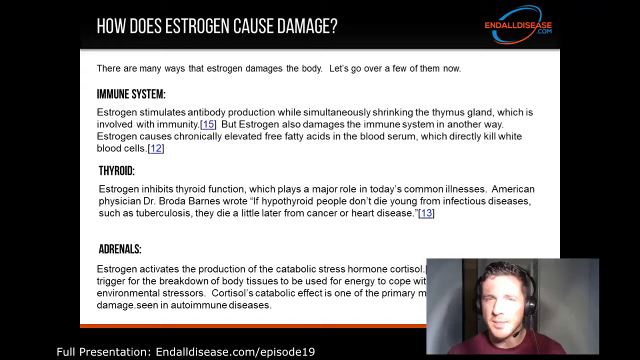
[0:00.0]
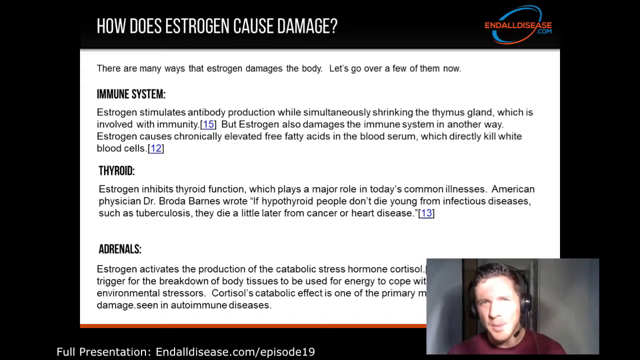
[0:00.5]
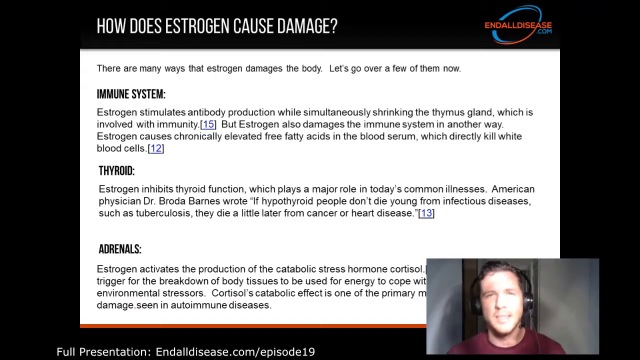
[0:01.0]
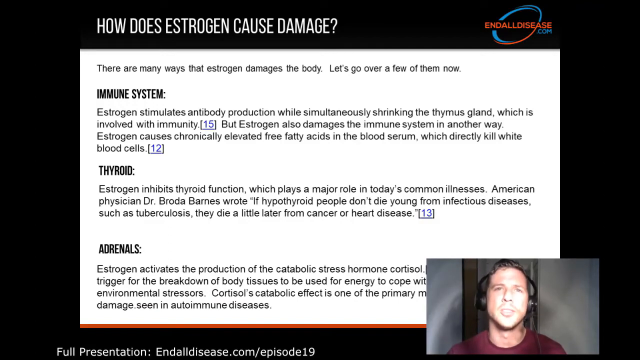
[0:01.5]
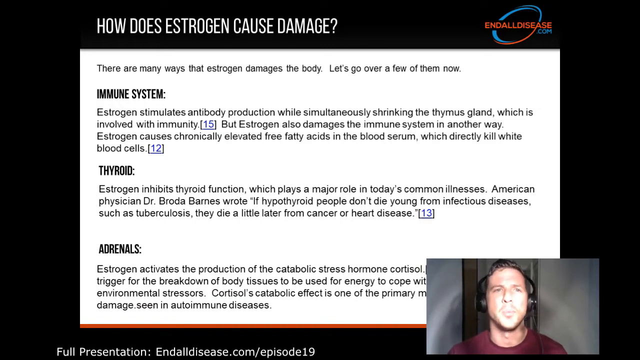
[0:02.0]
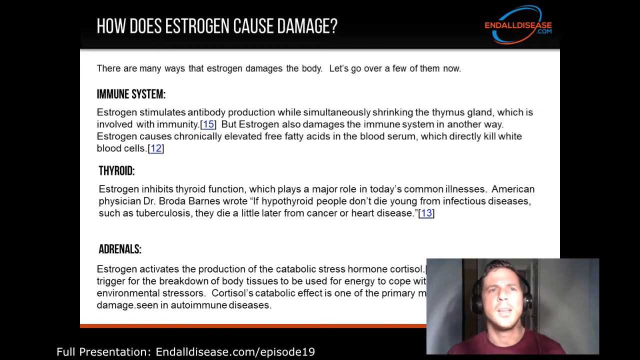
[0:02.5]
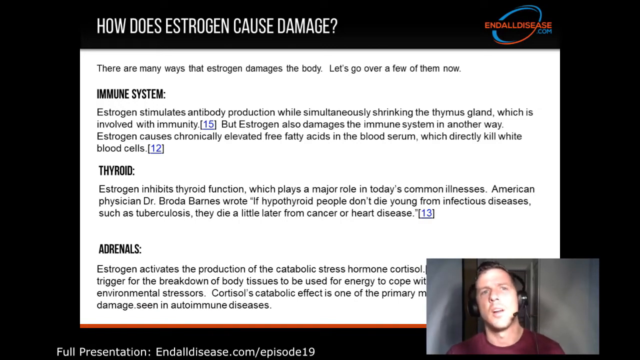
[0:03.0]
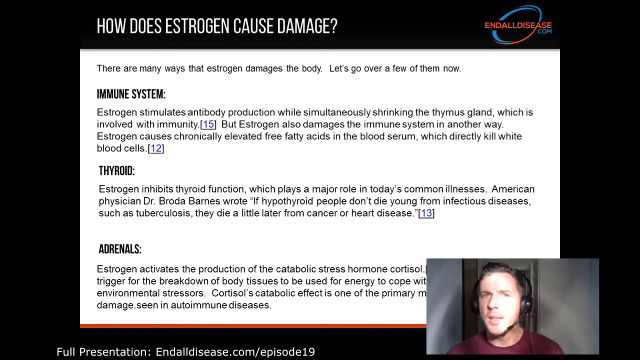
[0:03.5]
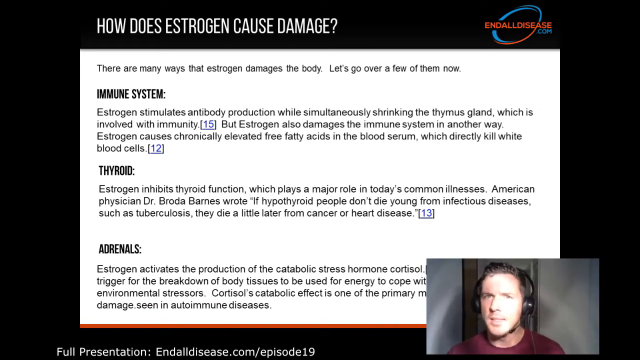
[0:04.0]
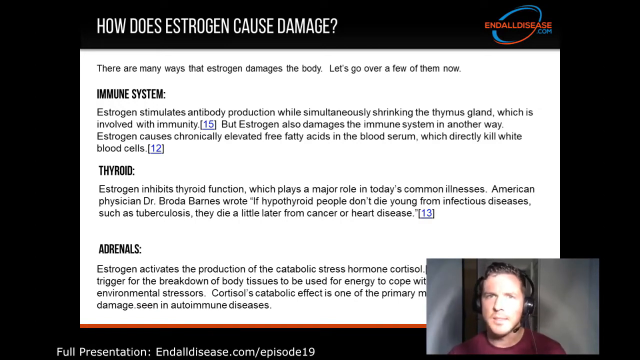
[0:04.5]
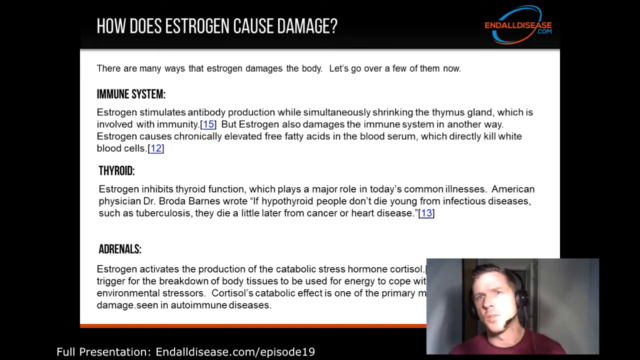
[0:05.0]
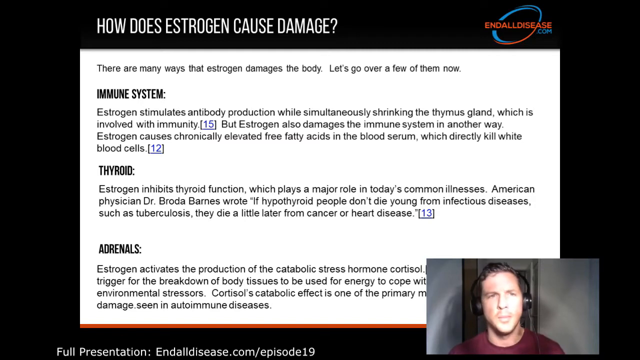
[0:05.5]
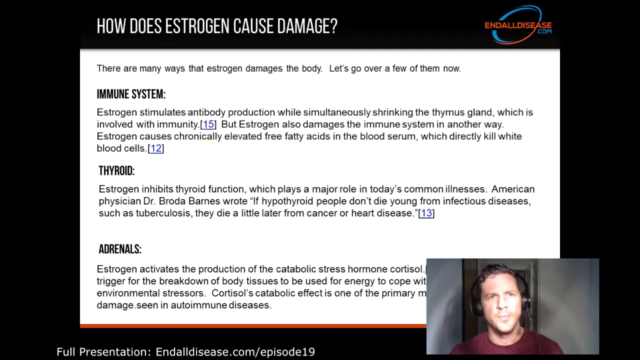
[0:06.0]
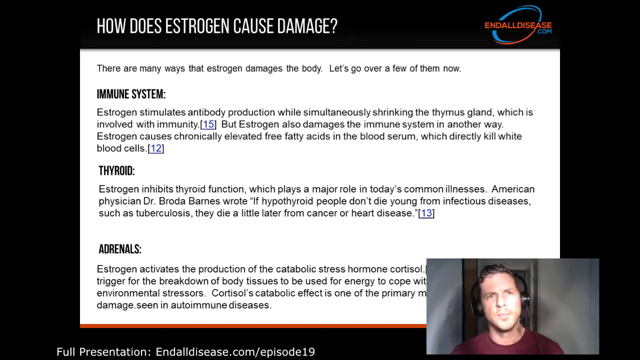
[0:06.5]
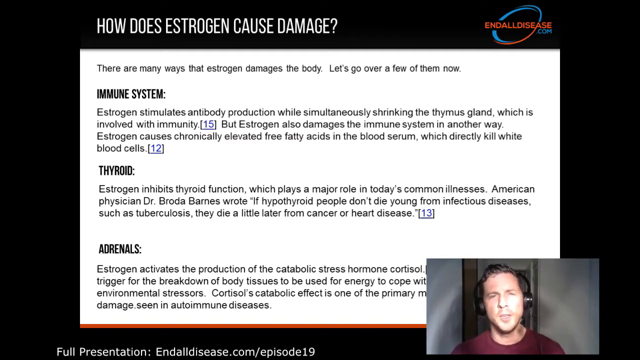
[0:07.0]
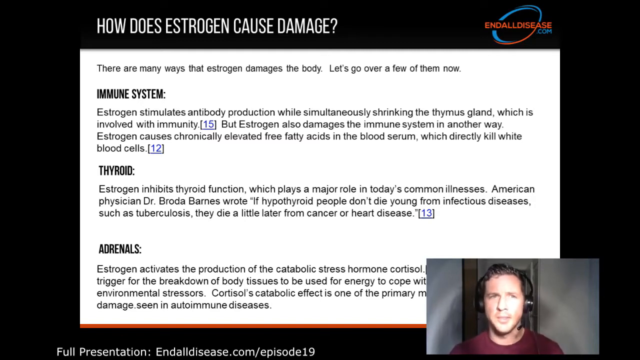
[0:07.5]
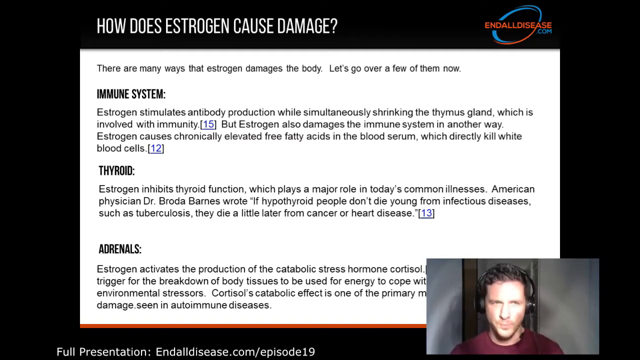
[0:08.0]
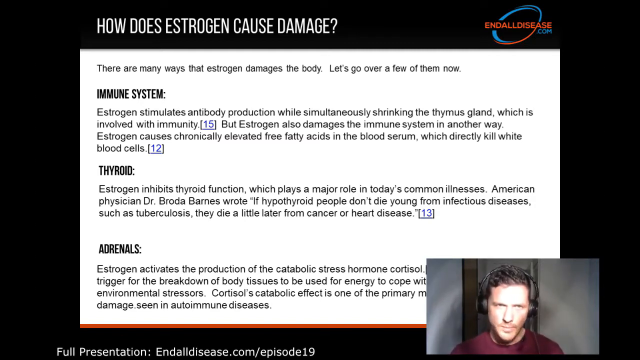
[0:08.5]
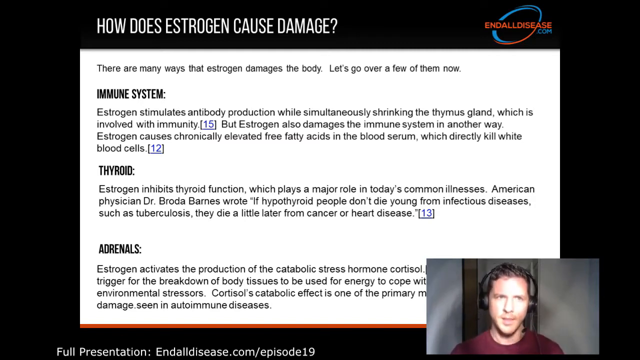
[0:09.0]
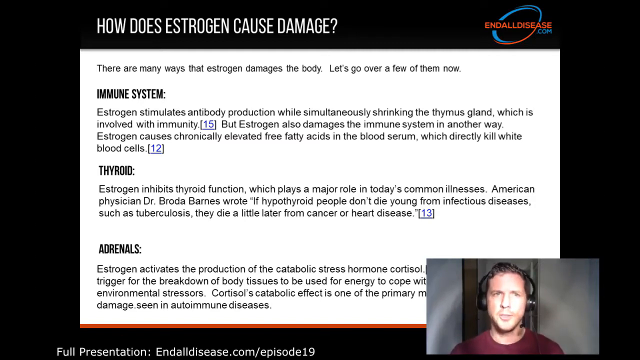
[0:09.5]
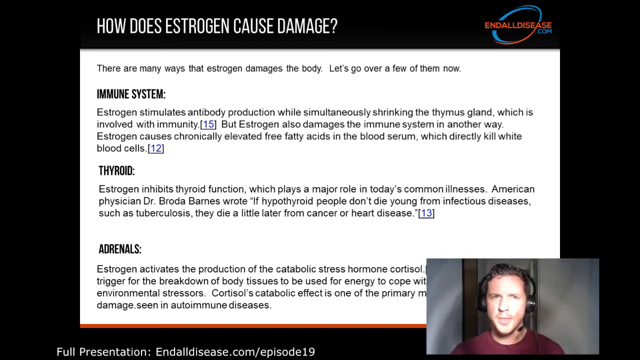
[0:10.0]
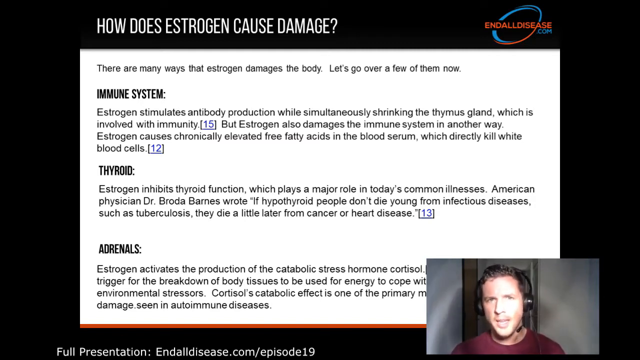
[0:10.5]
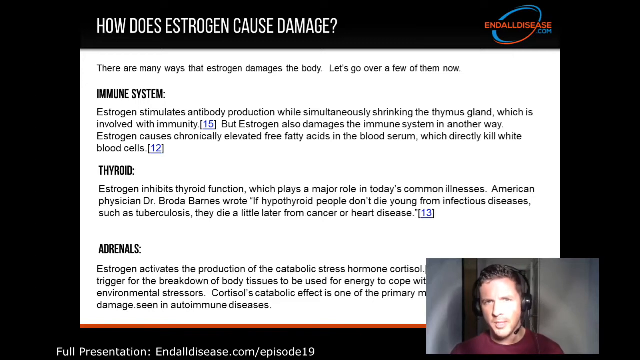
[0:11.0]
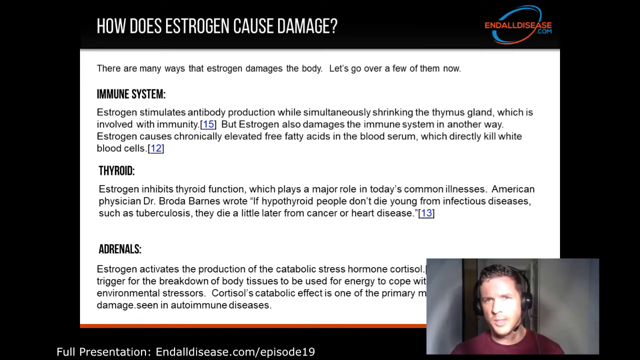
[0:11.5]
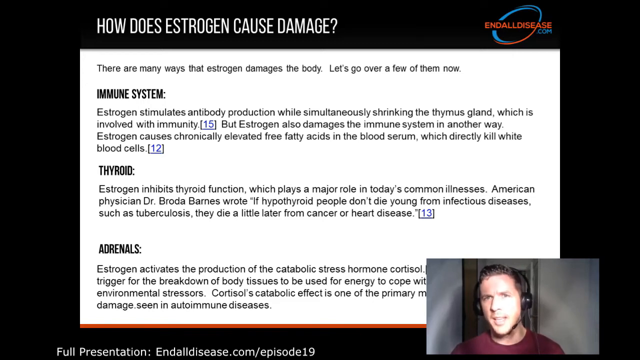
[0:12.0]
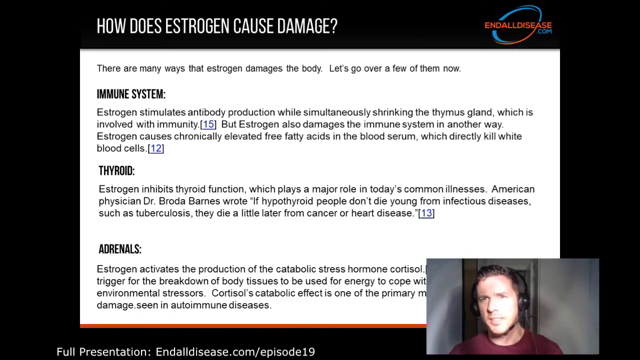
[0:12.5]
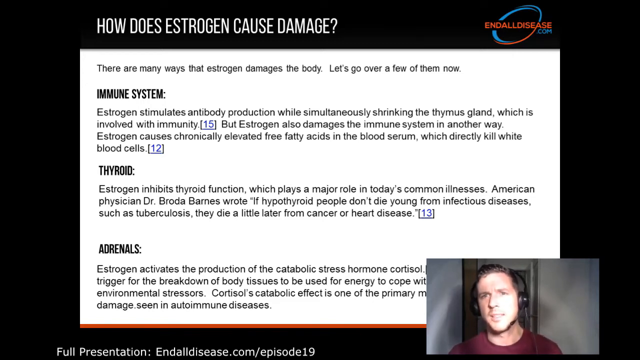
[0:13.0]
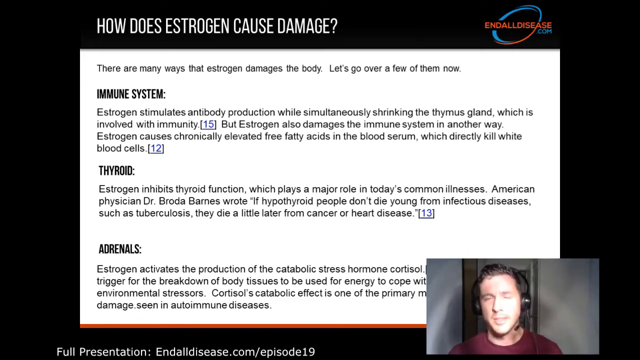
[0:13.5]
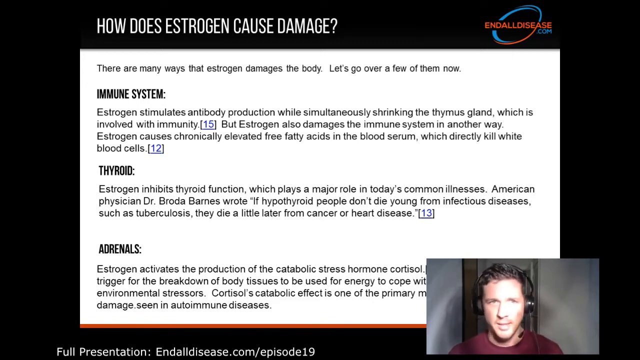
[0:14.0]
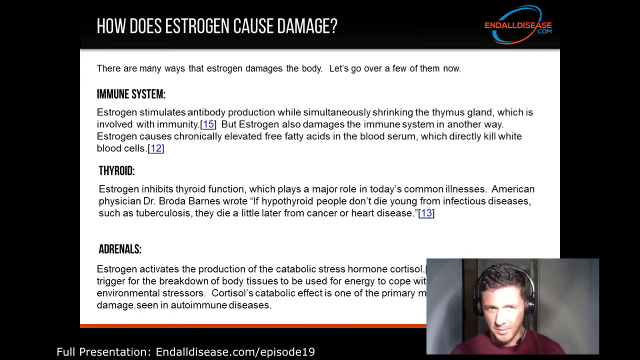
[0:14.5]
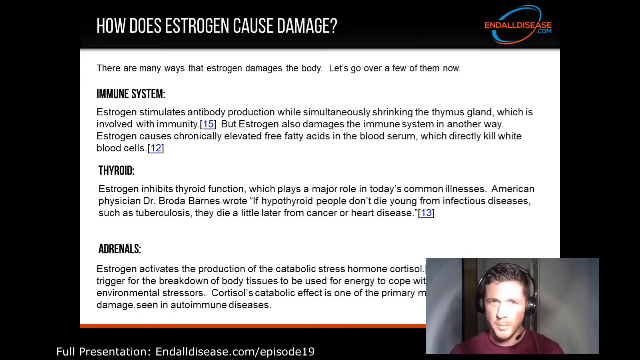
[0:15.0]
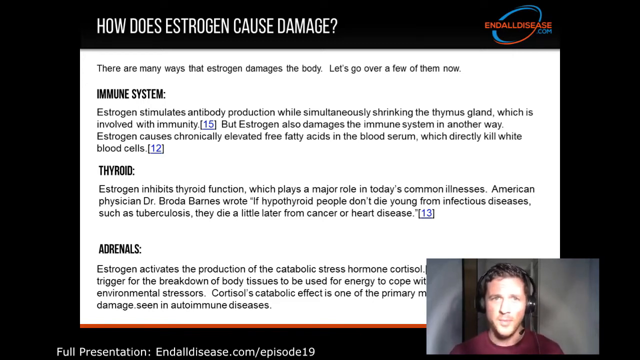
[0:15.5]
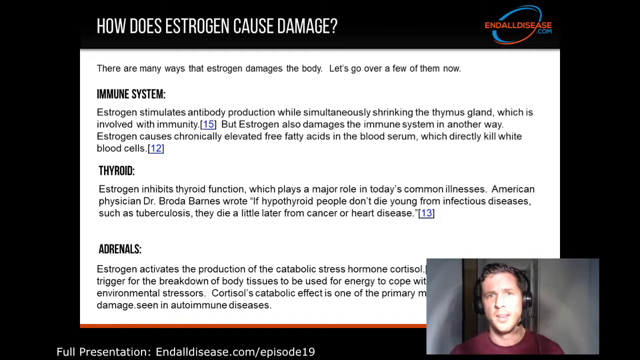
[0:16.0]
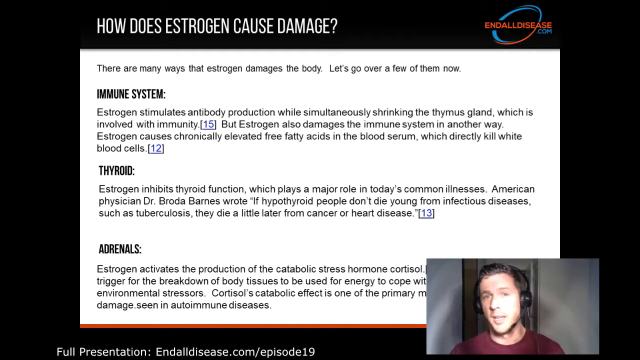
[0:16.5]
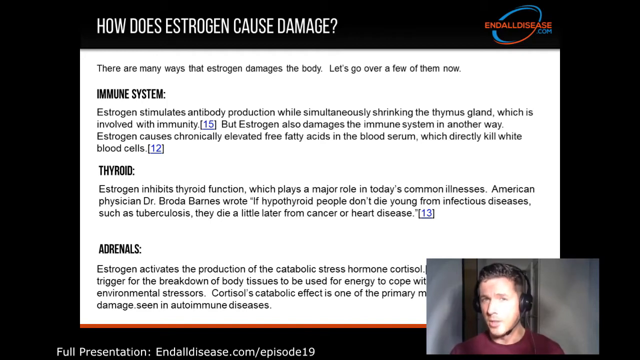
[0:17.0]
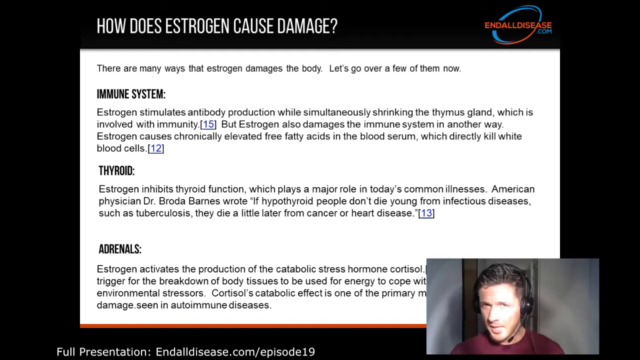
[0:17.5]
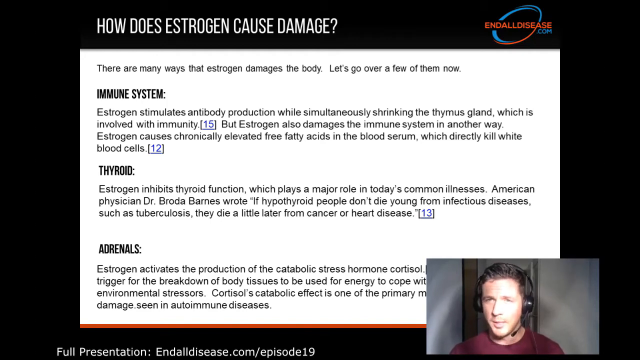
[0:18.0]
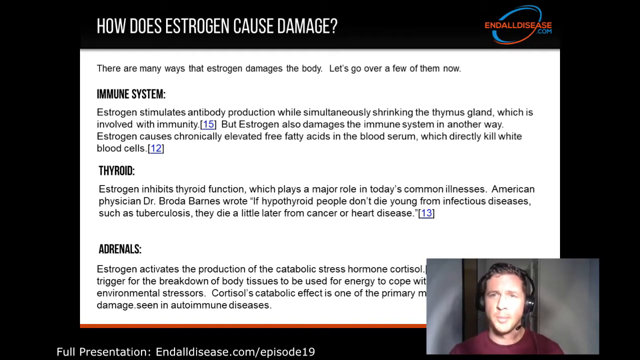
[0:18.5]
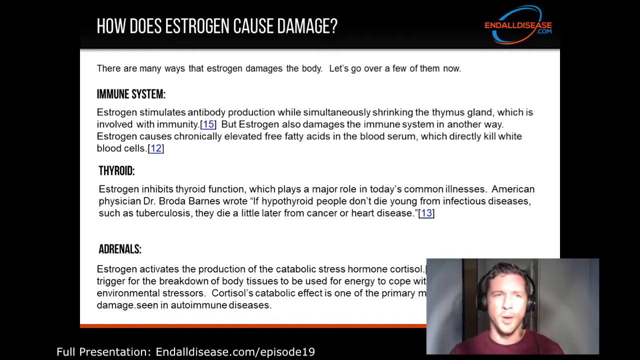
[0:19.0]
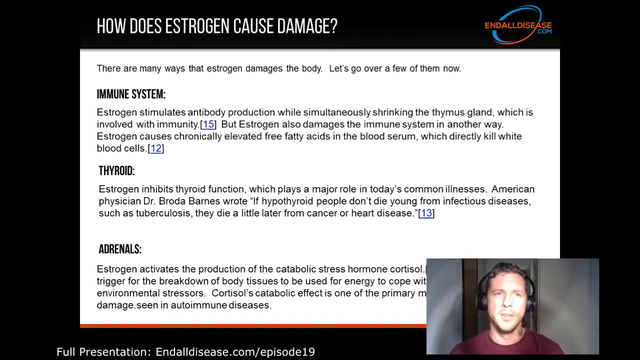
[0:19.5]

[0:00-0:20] A screen of text that looks like it's from a chart or a page from an article has the header "How Does Estrogen Cause Damage?" Below it are different categories of the ways estrogen affects the body, with headers including "Immune System," "Thyroid," and "Adrenals." The text under Immune System explains that estrogen stimulates antibody production but also shrinks the thymus gland, which is involved with immunity. Under Thyroid, the text says that estrogen inhibits thyroid function, which plays a major role in common illnesses. At the bottom of the page, the last header is Adrenals, and its text says that estrogen activates the production of the catabolic stress hormone cortisol, among other things. In the lower right corner is a video box of a man wearing headphones, speaking to the camera, visible only from the neck up. The box obscures part of the bottom paragraph.